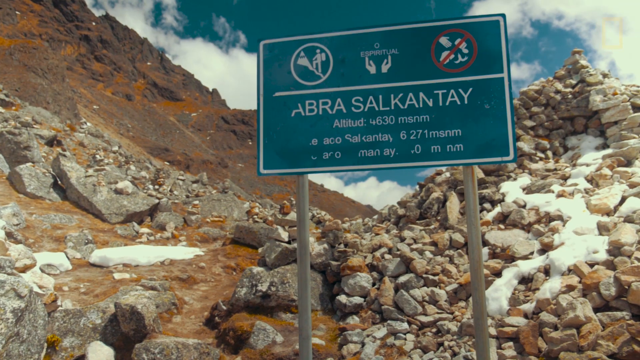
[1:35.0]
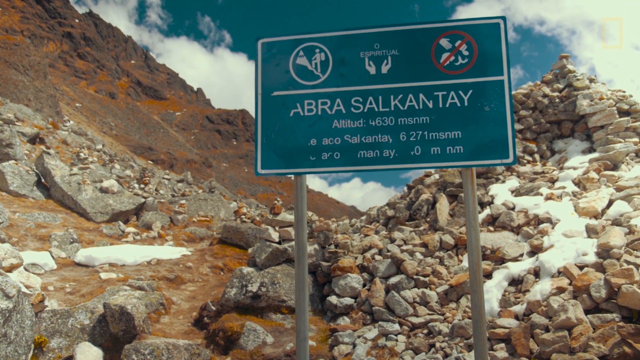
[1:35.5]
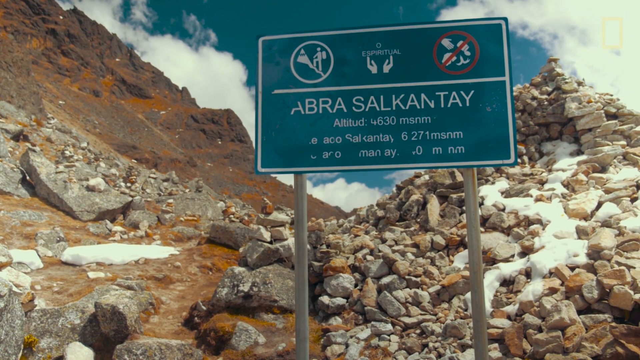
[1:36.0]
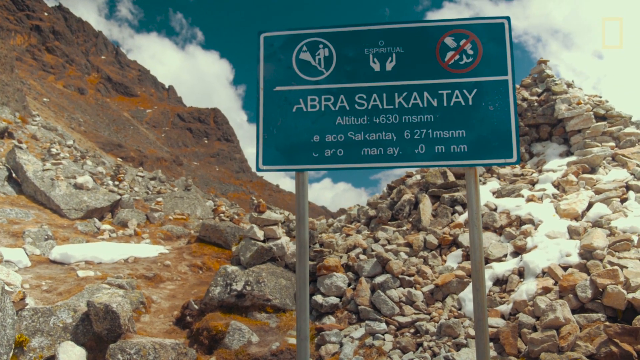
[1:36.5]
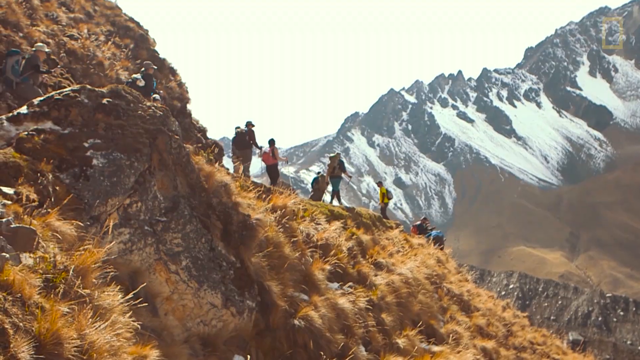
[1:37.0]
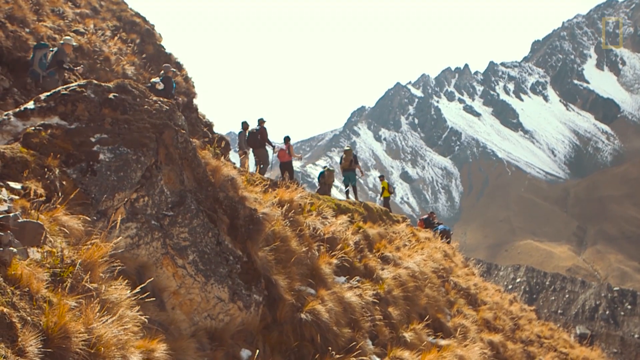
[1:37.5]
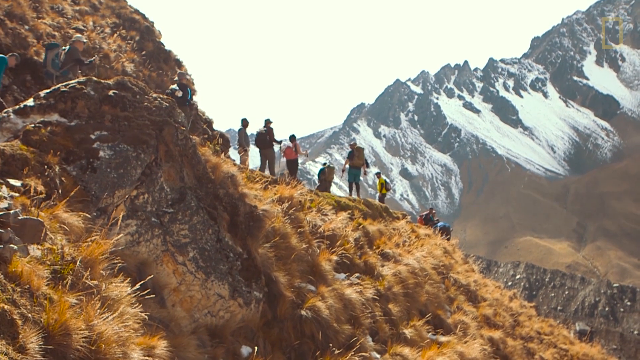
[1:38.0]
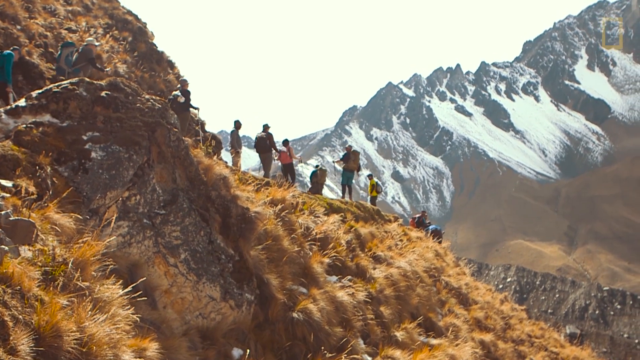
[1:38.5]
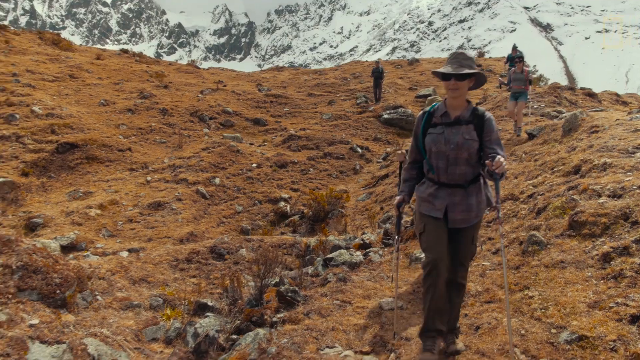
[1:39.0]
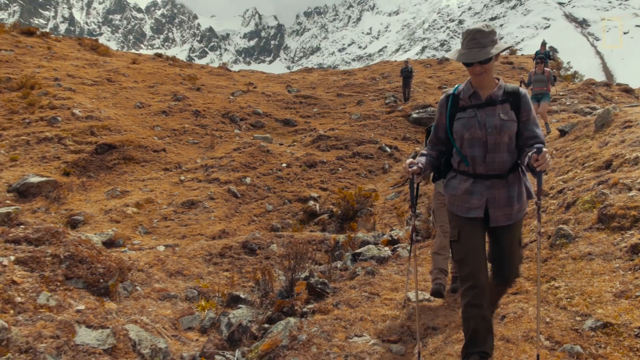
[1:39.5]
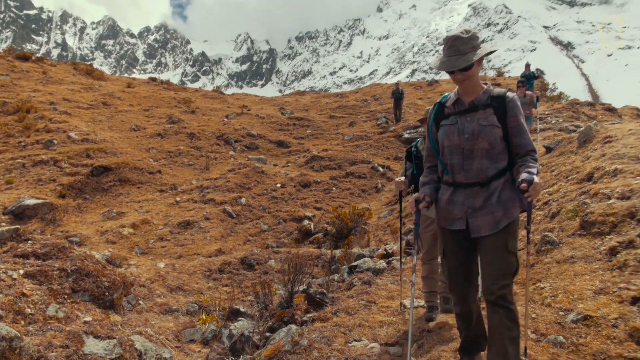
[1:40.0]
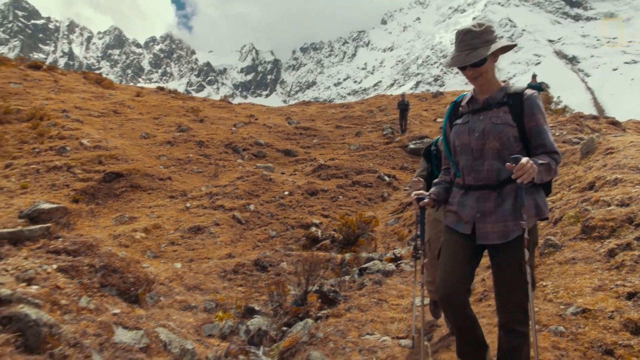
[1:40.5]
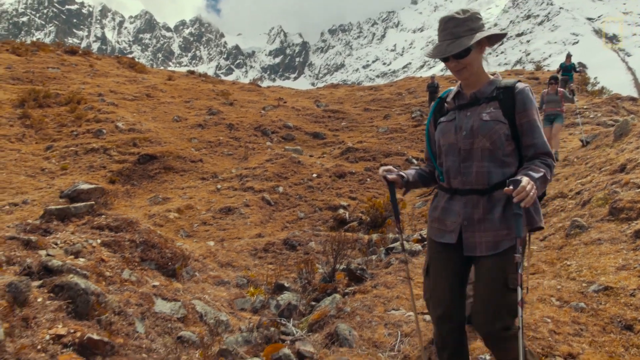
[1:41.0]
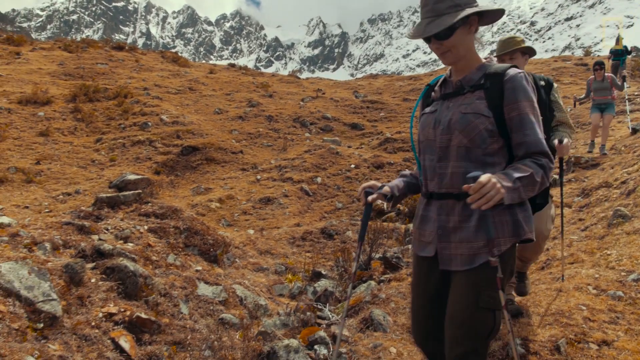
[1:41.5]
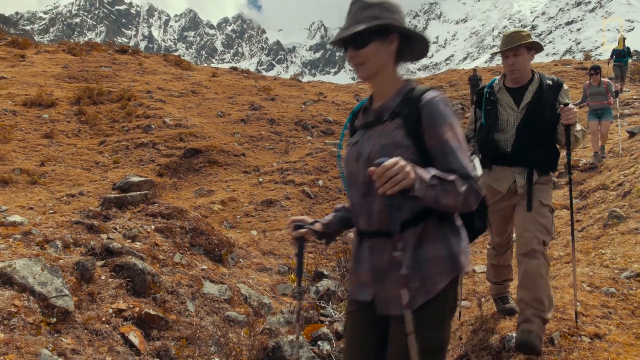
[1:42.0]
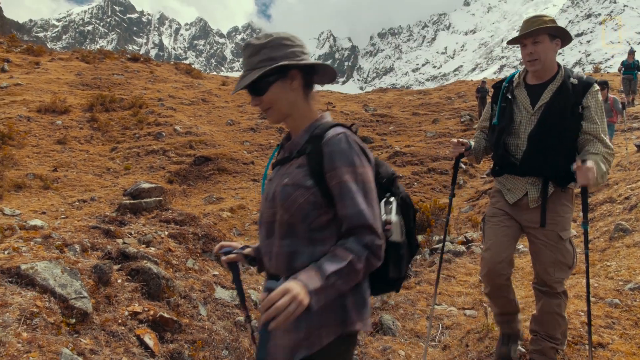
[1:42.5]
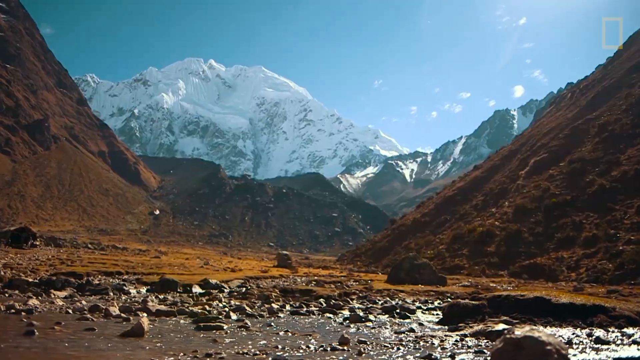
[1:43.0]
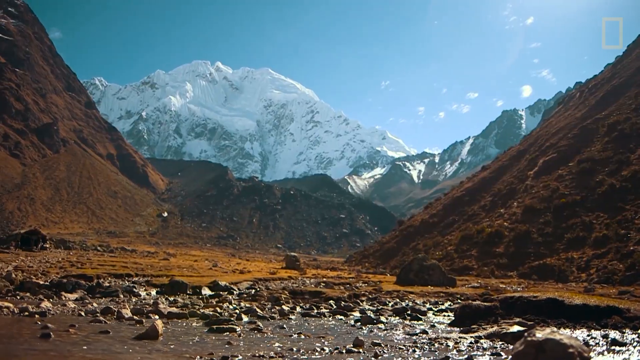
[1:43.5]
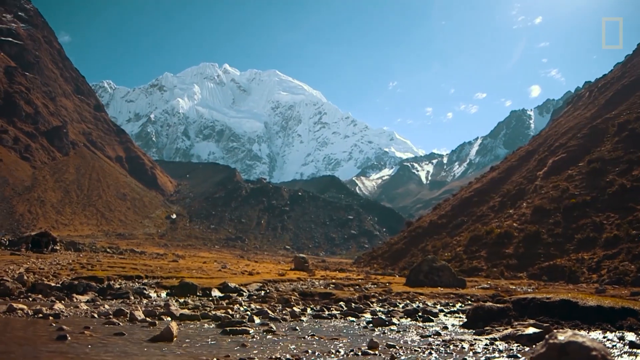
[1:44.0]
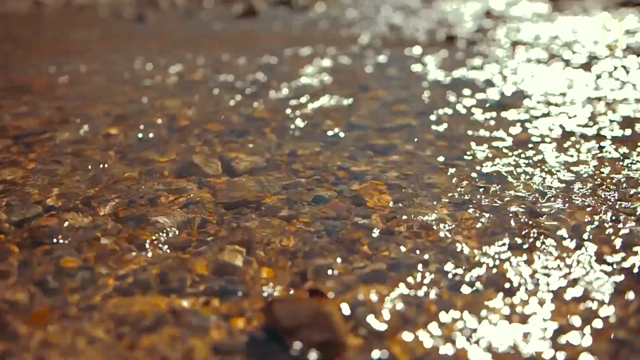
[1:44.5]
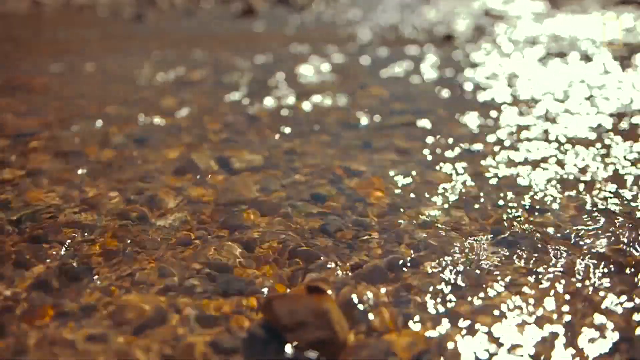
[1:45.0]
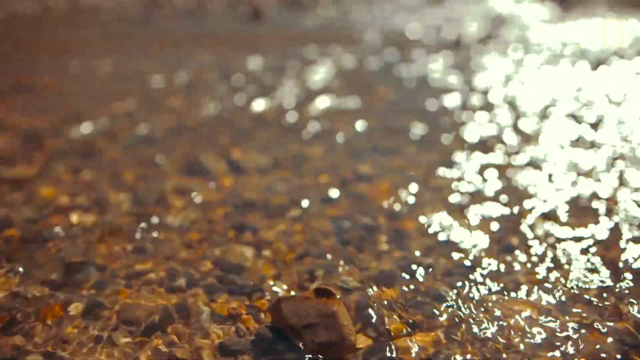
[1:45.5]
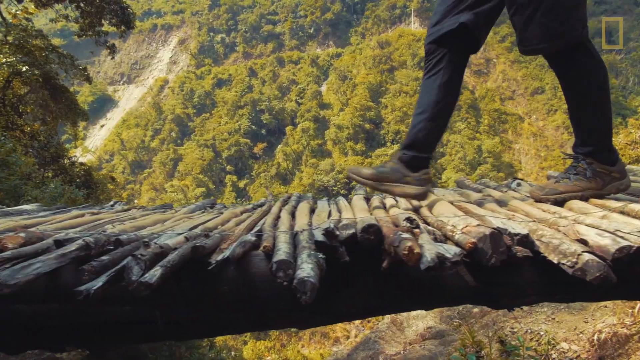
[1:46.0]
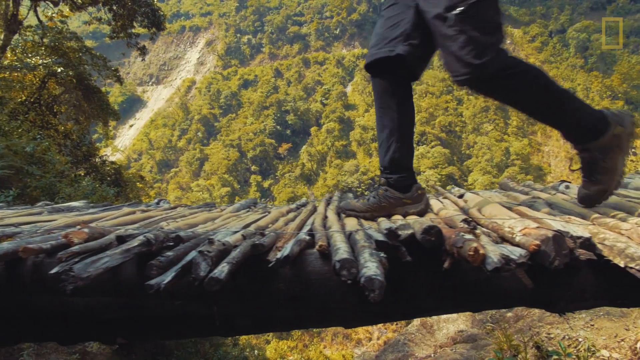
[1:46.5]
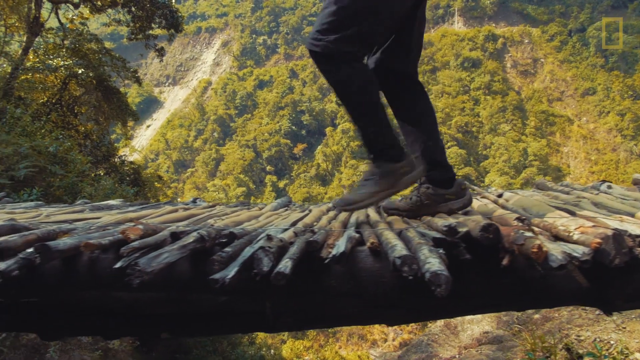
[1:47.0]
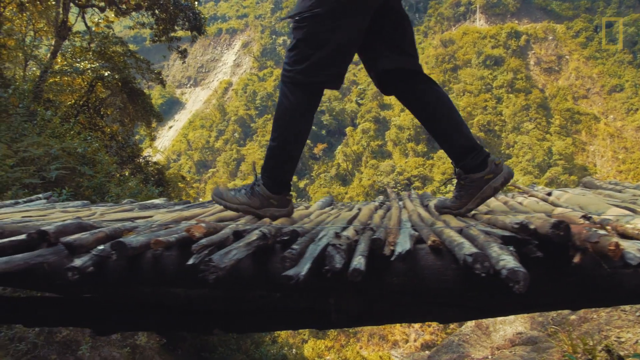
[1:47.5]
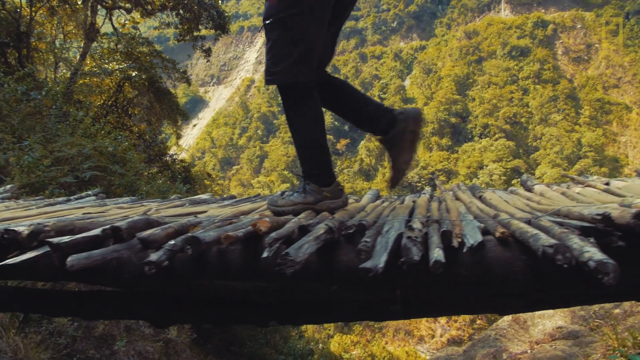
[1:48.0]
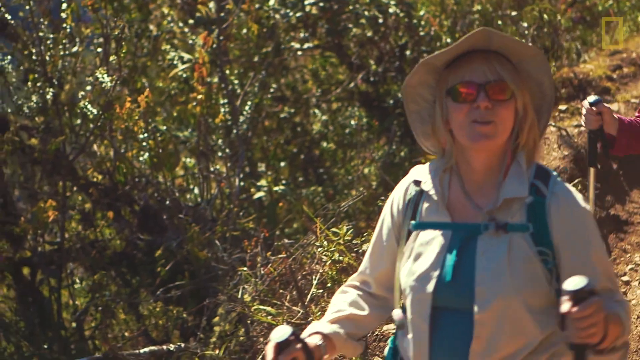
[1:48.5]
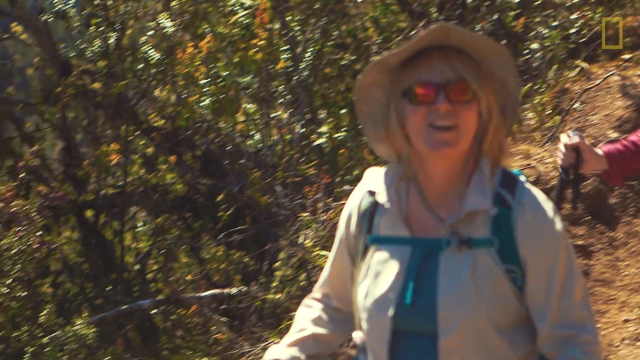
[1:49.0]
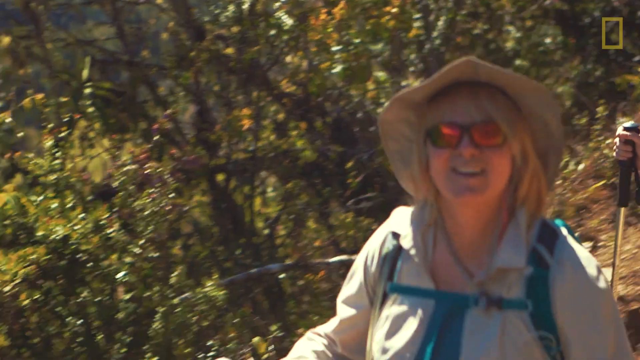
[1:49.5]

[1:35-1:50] Another view of the trail shows scenery in greens and golds, hikers, and a blue sign with white lettering announcing the summit and giving directions. Many more hikers are out there. The weather is warmer, seemingly nearer the base of the trail, as people are not wearing coats or gloves. They carry trekking poles and wear more conventional hats with brims and hiking shoes. One photo shows them crossing the wood bridge, made of round sapling poles nailed down onto what looks like a couple of stringers, with no railing. Most of the hikers are about age 30 and up. At one point the view is down in a valley, looking at the river flowing and water trickling down the stream, with mountains in the background. Most of the pictures show snow-covered mountains. The hikers are just getting started on the way up to Machu Picchu.